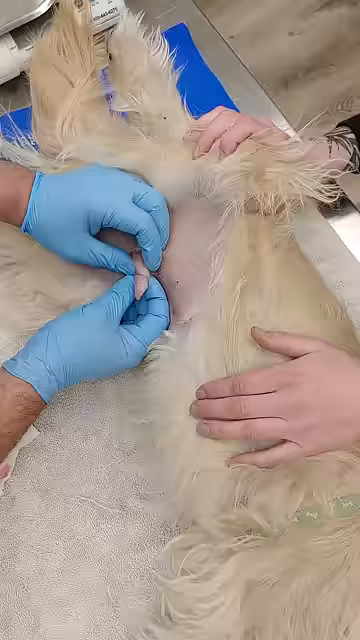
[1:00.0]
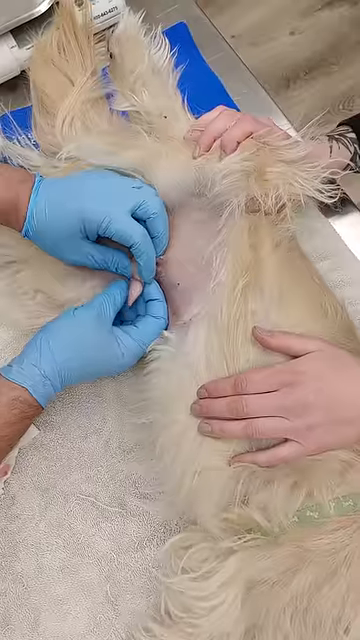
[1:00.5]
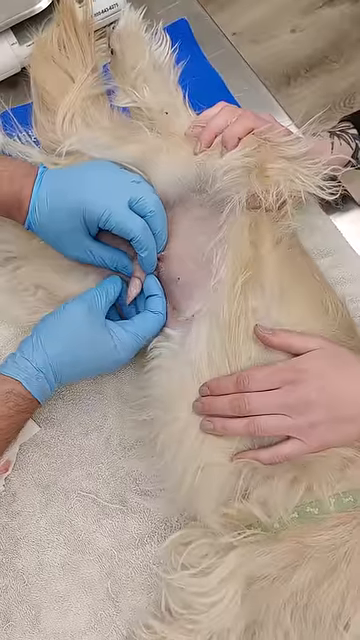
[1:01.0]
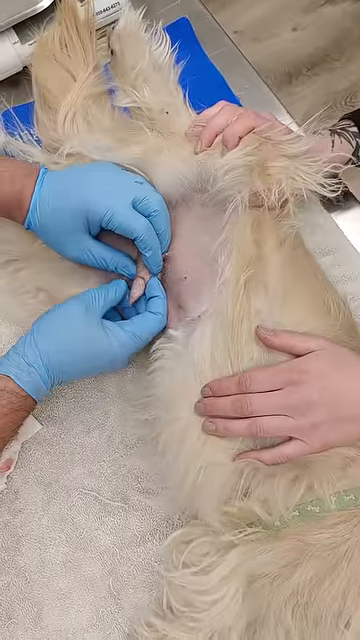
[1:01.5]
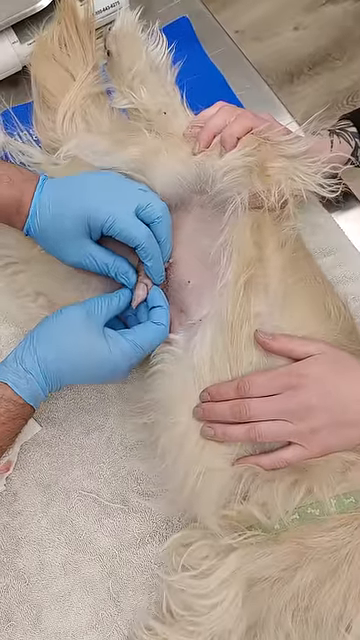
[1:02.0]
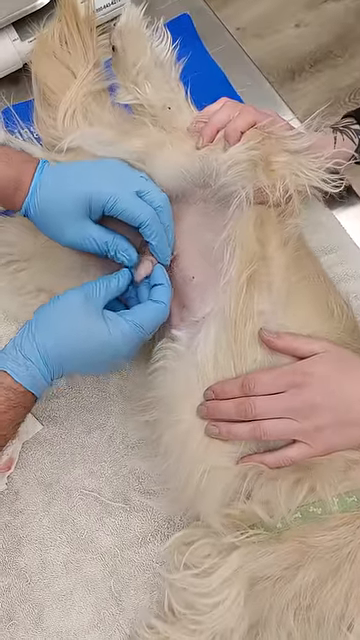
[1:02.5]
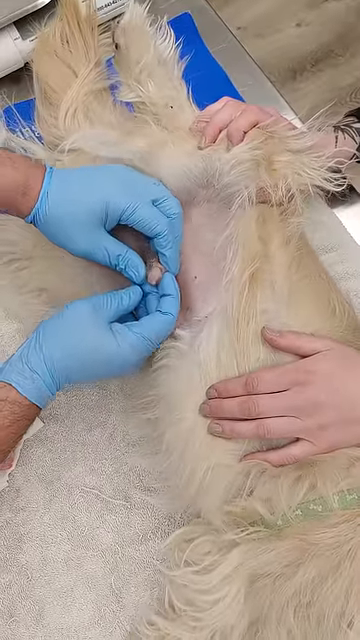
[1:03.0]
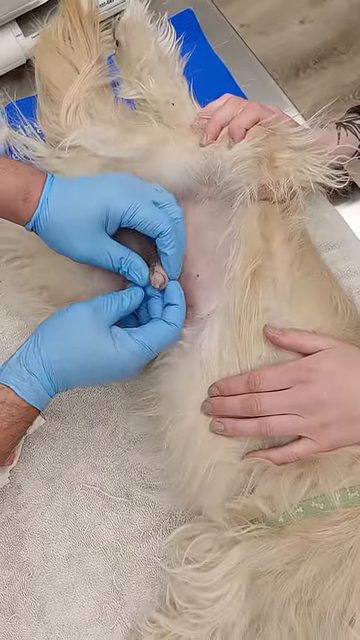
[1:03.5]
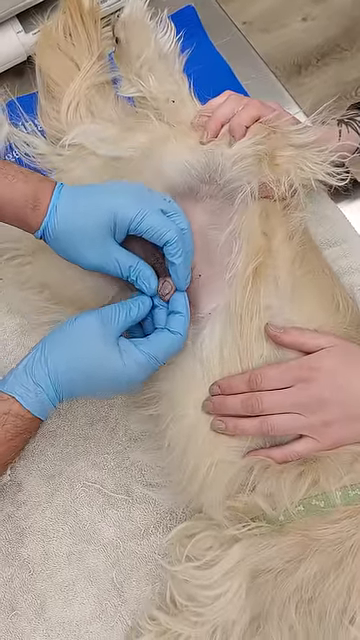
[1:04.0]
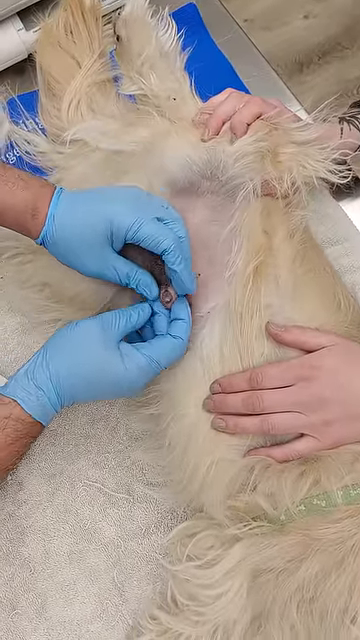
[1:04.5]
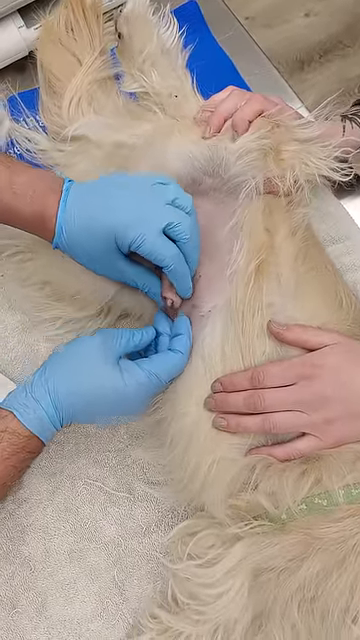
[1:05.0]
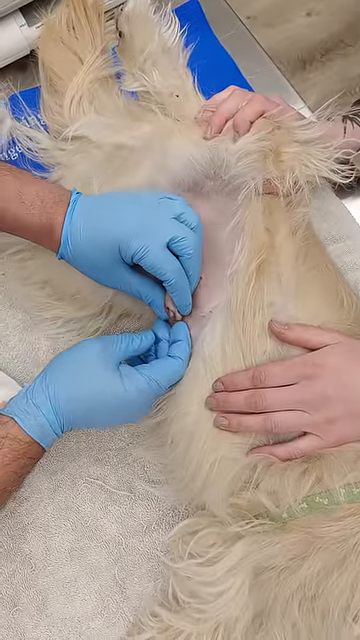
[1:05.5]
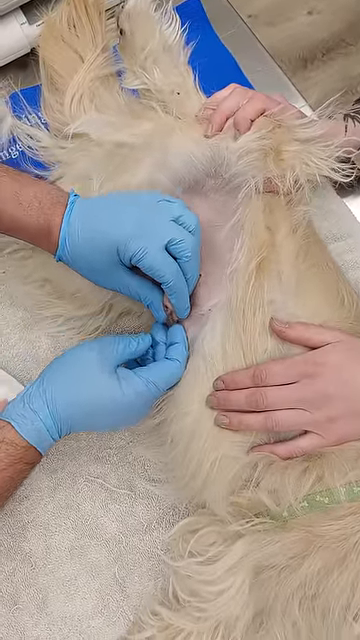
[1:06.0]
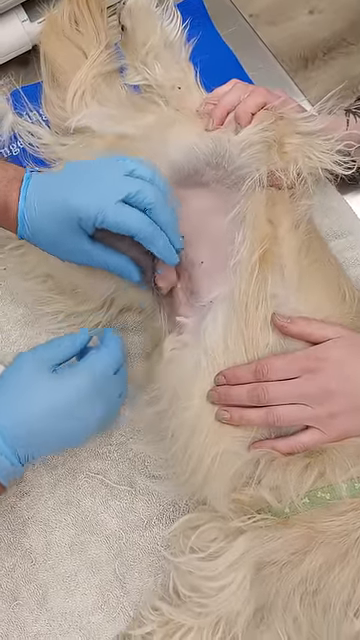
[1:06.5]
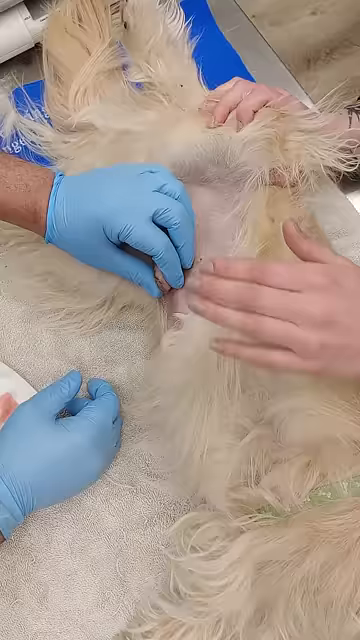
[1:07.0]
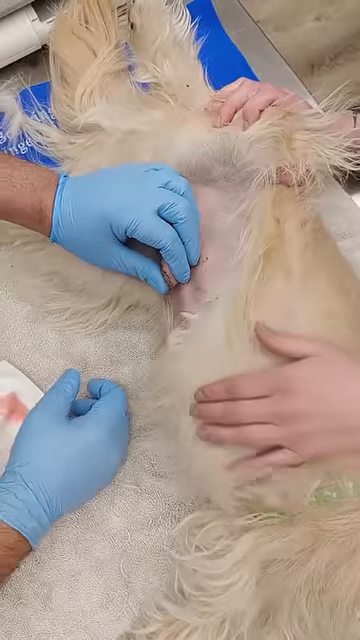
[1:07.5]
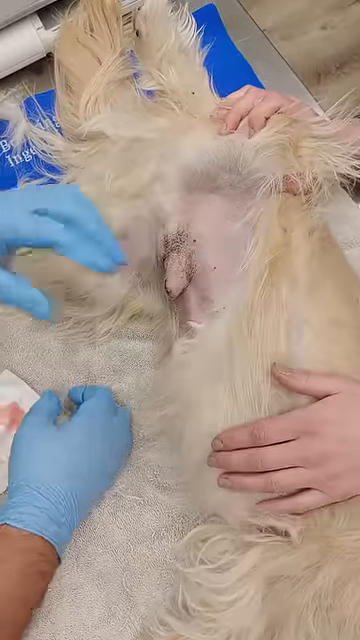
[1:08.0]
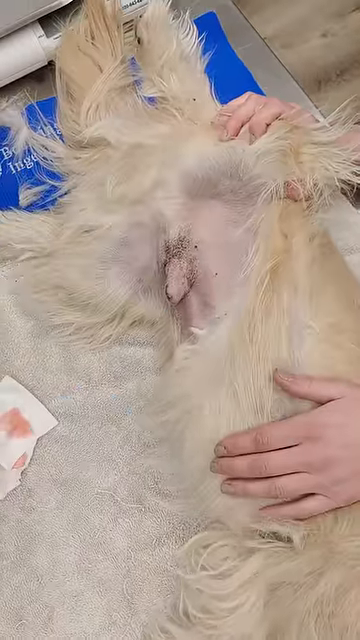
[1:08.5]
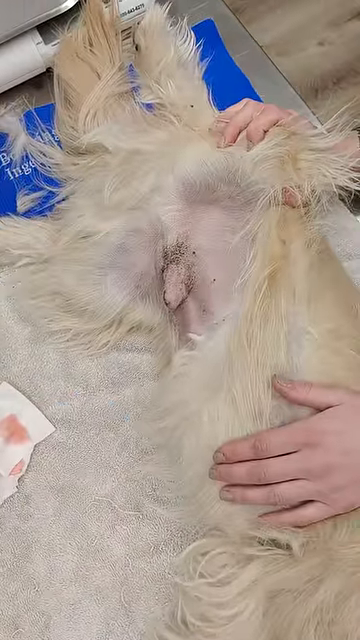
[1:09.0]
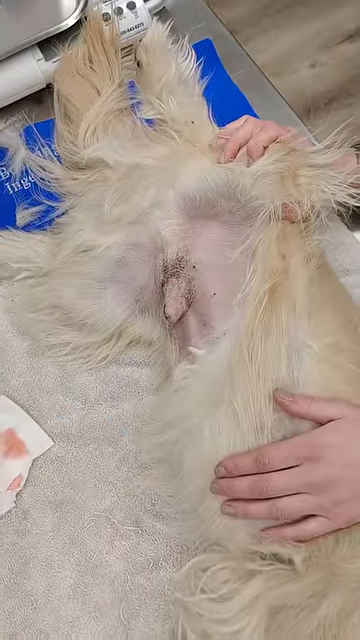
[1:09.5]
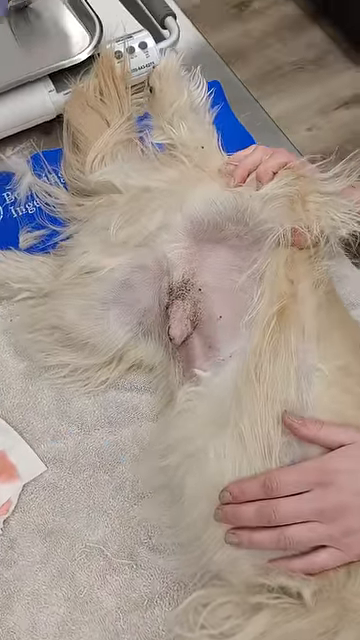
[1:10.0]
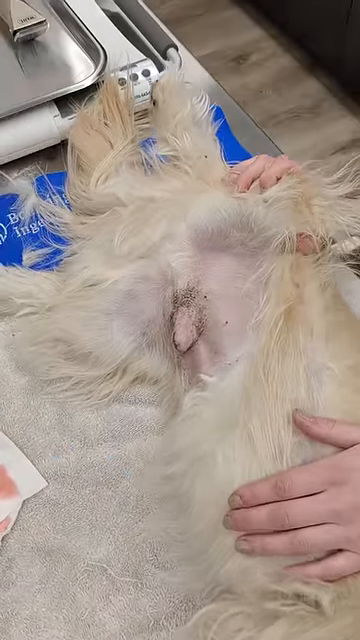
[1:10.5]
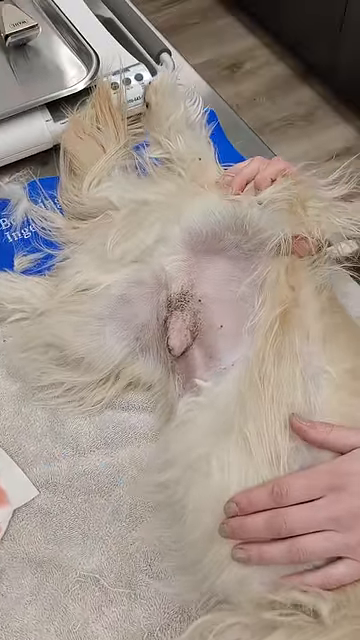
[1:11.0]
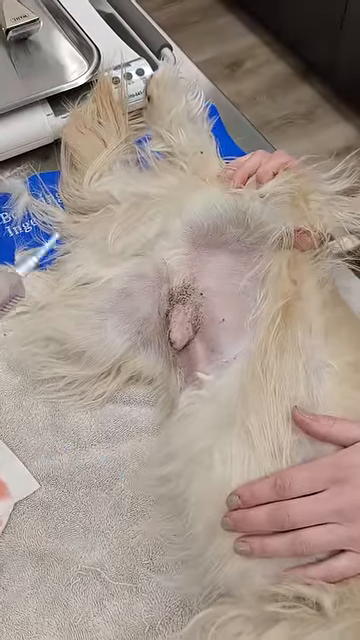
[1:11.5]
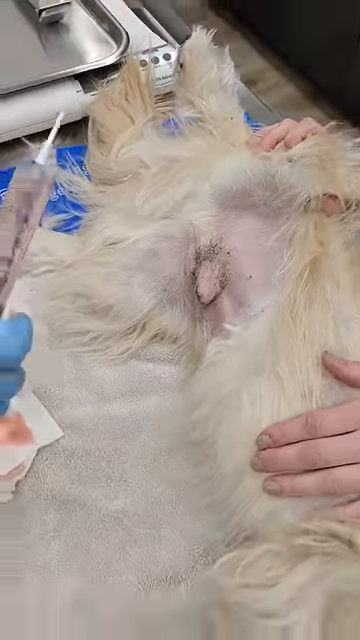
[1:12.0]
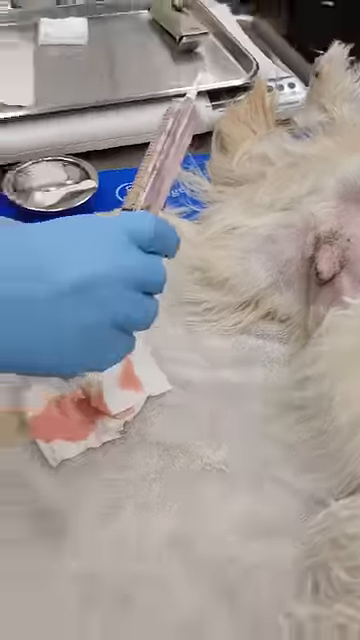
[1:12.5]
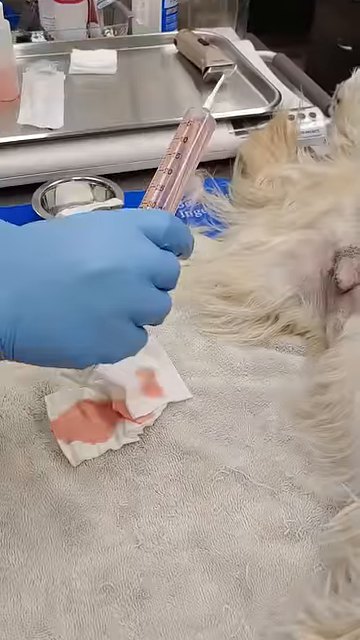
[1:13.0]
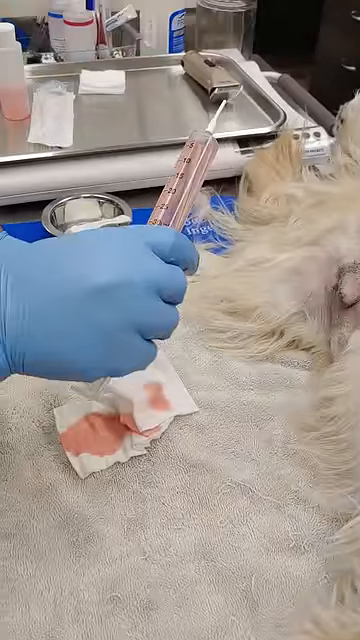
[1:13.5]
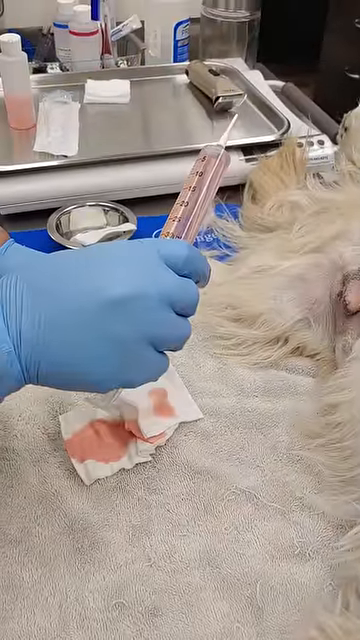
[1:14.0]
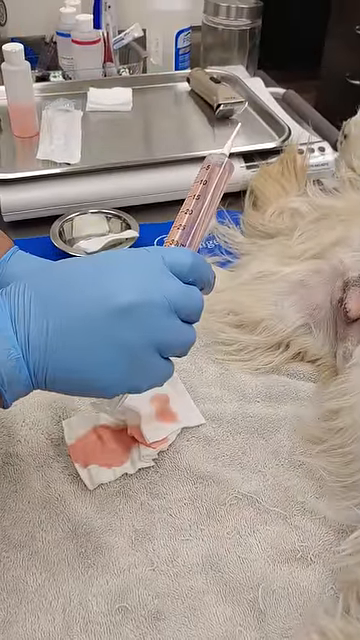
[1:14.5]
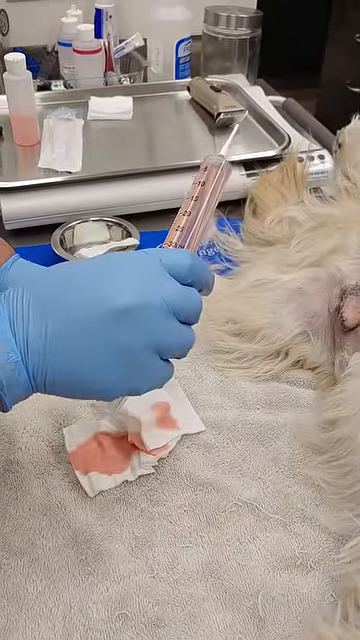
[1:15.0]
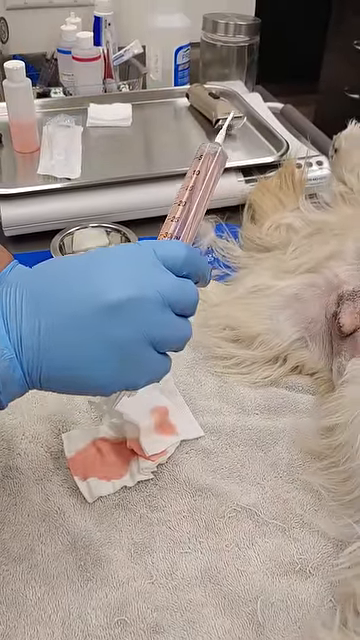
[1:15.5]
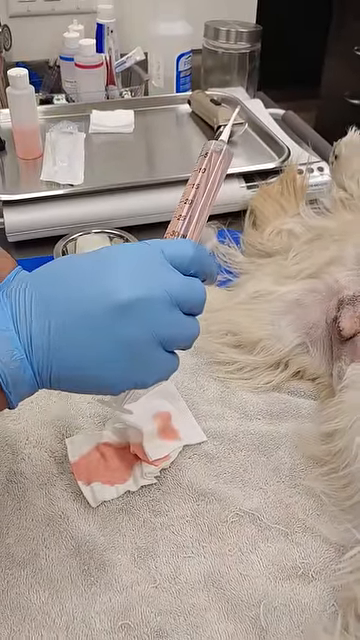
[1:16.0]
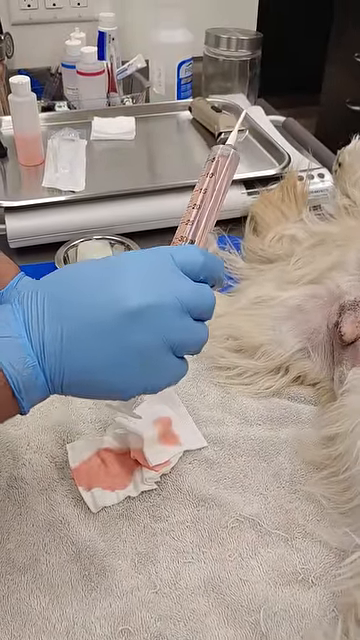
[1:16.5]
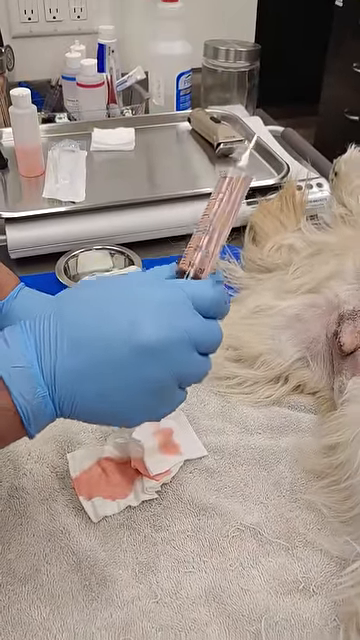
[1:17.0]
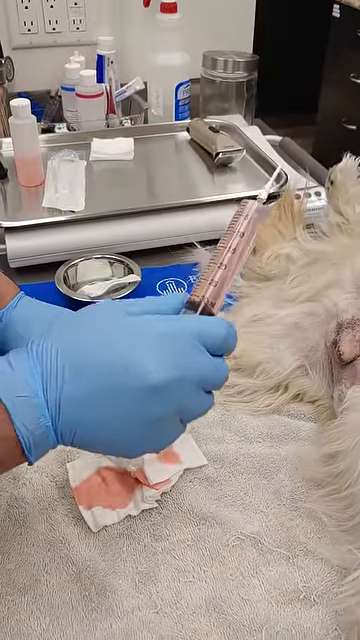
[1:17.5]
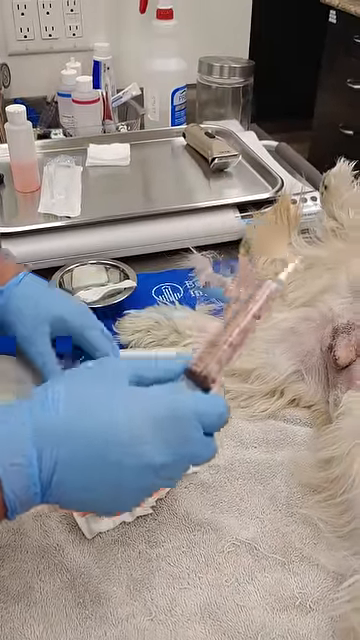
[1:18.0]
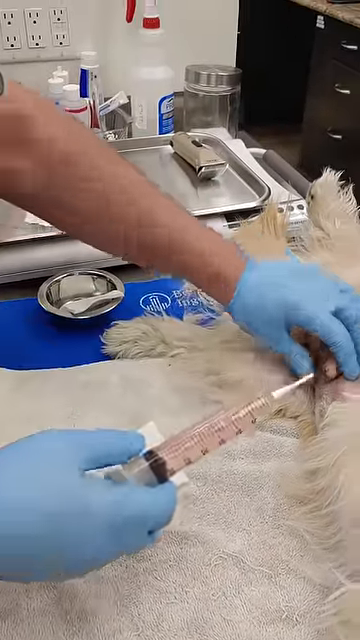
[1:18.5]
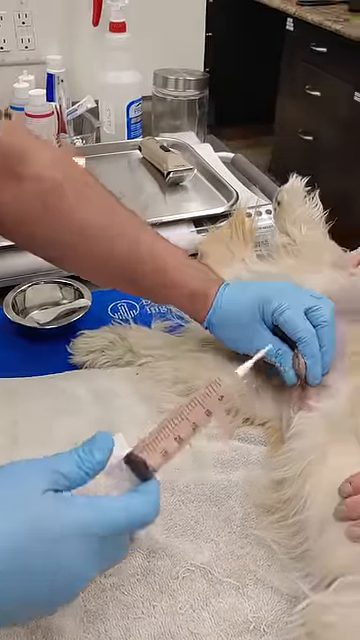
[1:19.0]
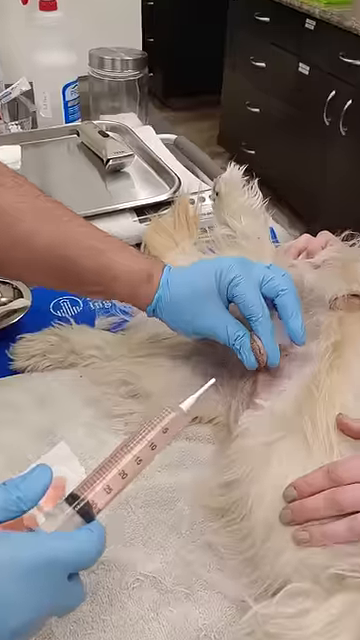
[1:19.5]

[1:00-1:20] The veterinarian, wearing rubber gloves, is on the left, and mostly only his hands are visible. An assistant helps hold down the dog, which is under anesthesia, as they are maybe about to perform some sort of surgery. He holds the dog's penis in his fingers and pulls back the sheath to expose the inside of the penis, then puts it back. He then gets out a syringe filled with liquid, kind of pinches the tip of the penis, and gets ready to insert a large catheter that is white at the top. A few paper towels are below his hands, where maybe a little fluid has come out and kind of saturated them, so they look a little wet and maybe pinkish. The liquid inside has a light pink, translucent color.